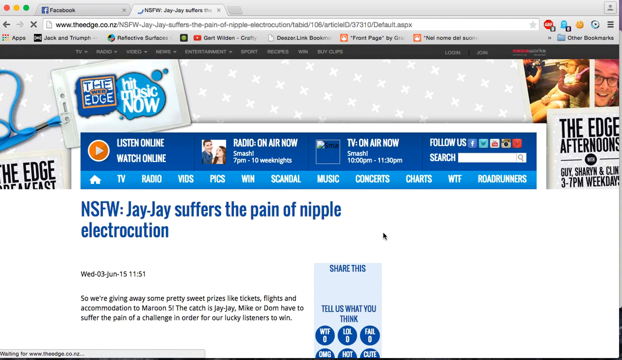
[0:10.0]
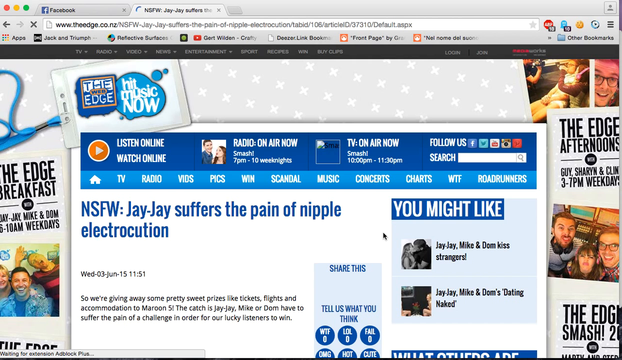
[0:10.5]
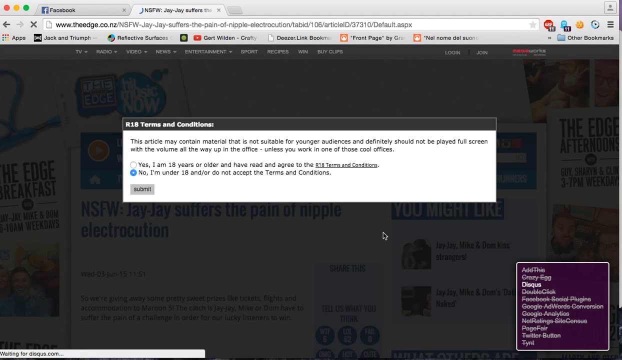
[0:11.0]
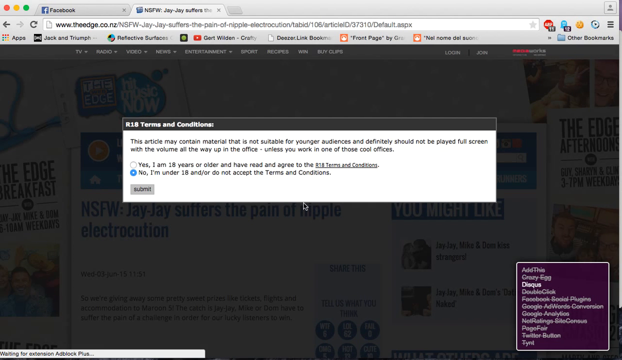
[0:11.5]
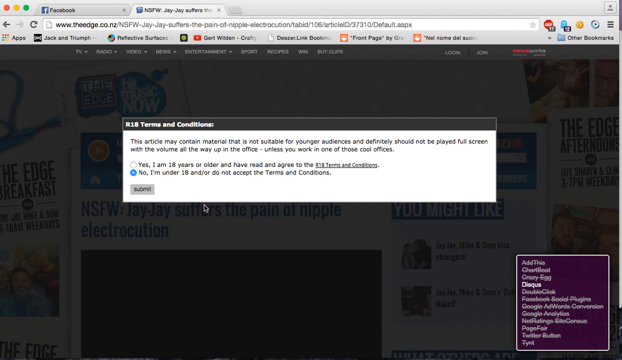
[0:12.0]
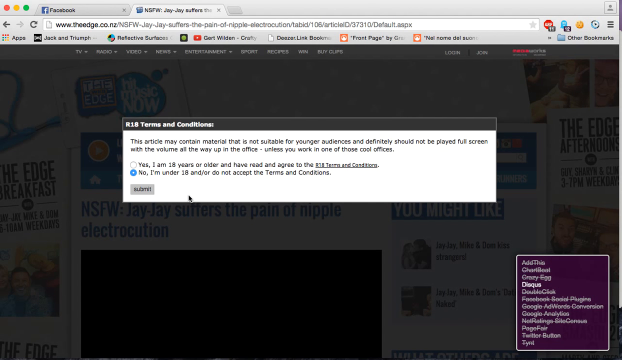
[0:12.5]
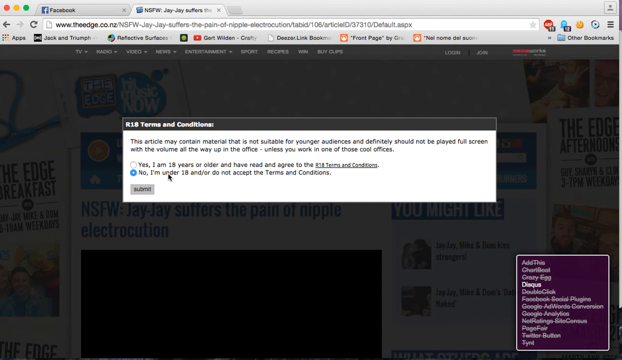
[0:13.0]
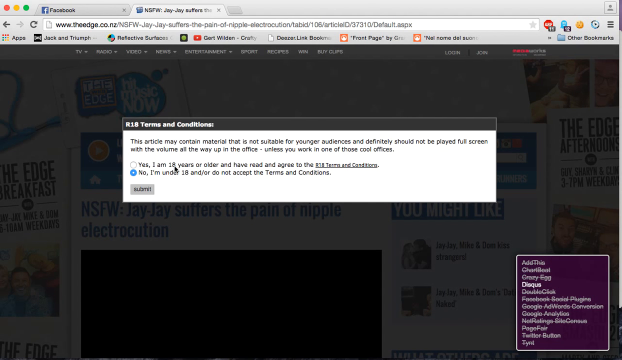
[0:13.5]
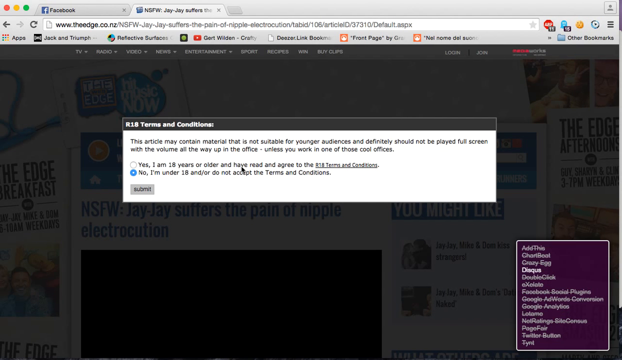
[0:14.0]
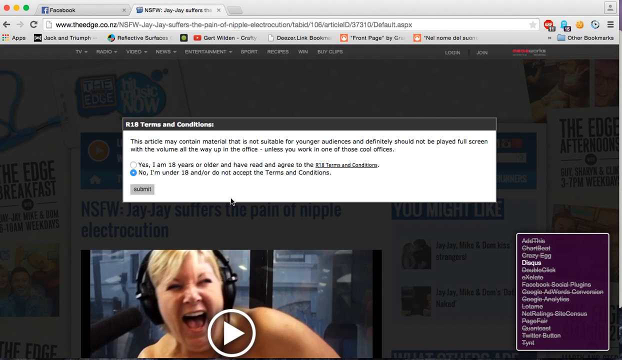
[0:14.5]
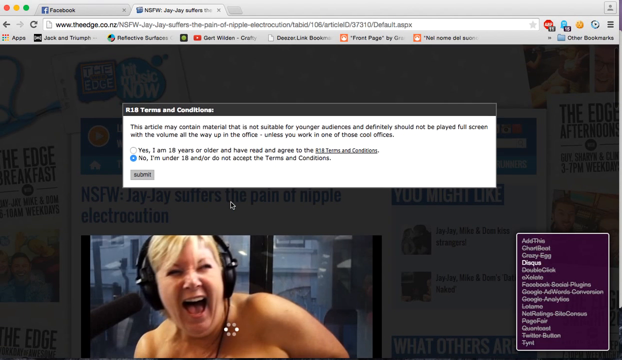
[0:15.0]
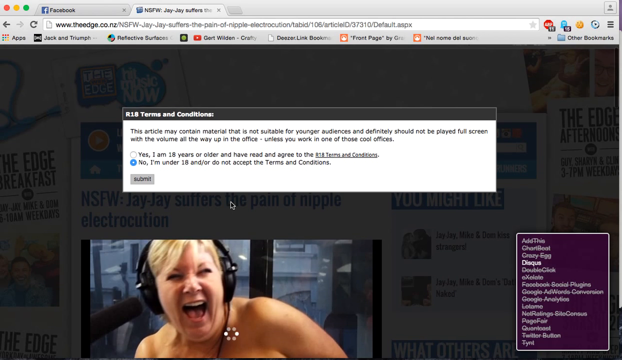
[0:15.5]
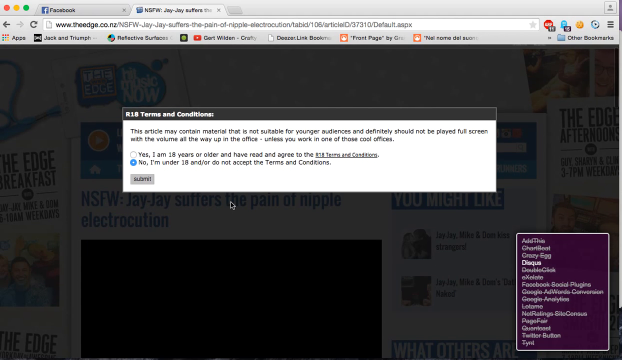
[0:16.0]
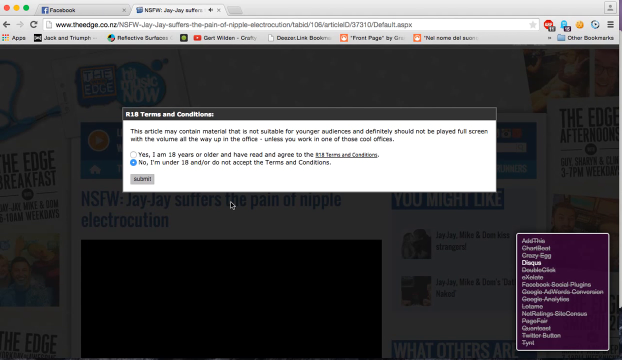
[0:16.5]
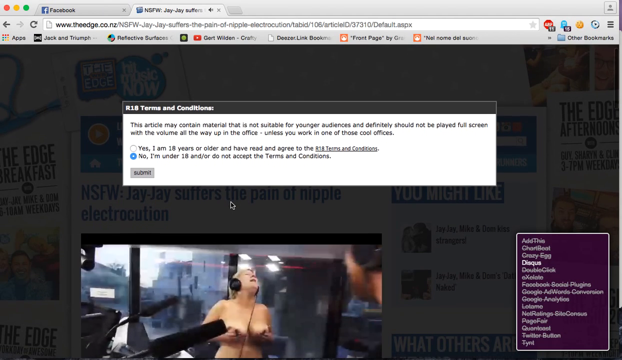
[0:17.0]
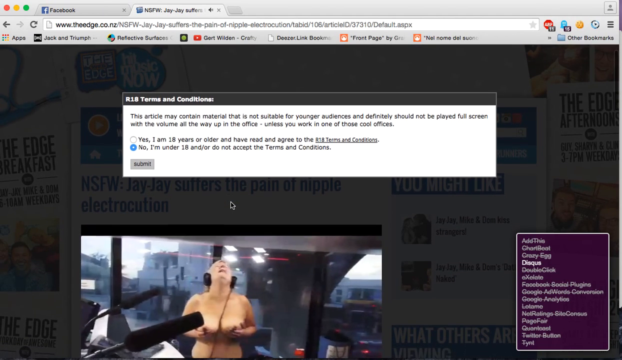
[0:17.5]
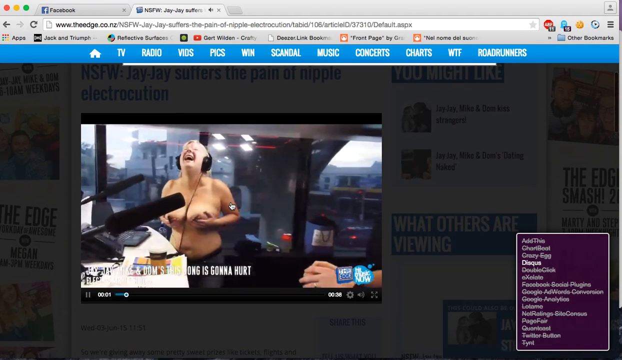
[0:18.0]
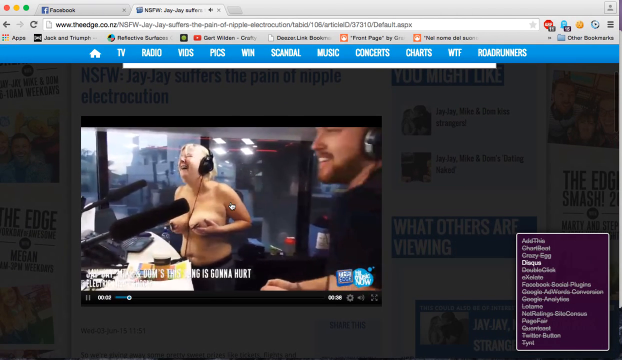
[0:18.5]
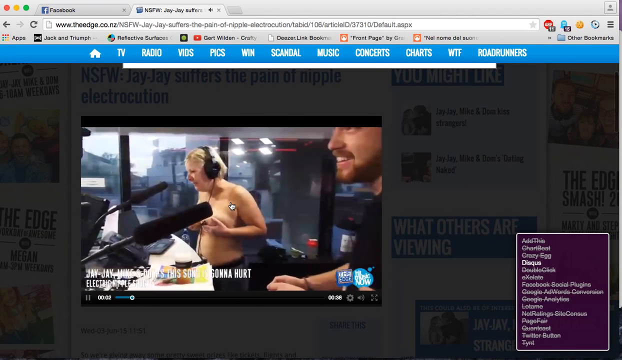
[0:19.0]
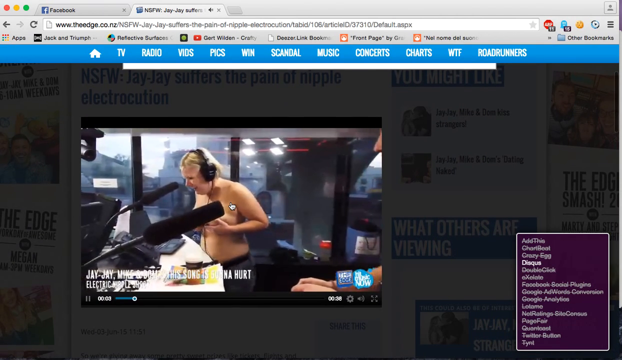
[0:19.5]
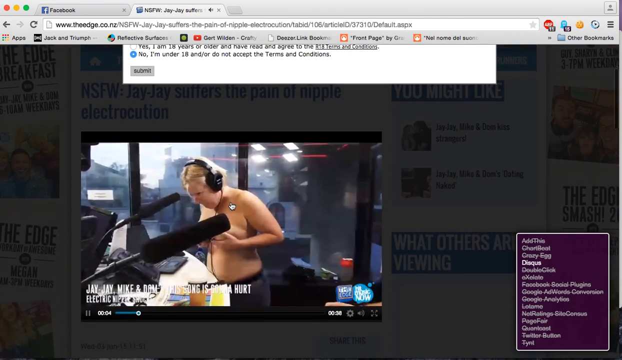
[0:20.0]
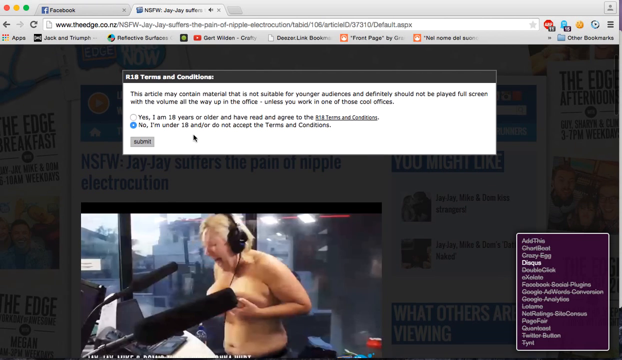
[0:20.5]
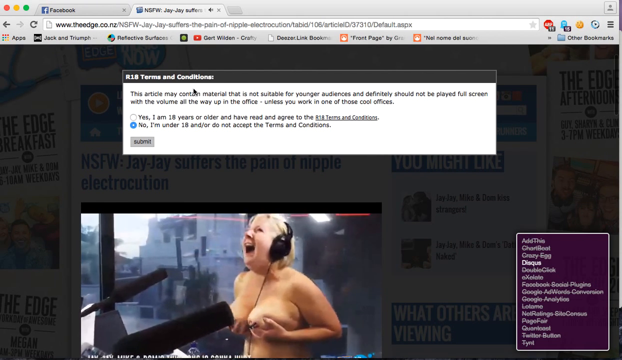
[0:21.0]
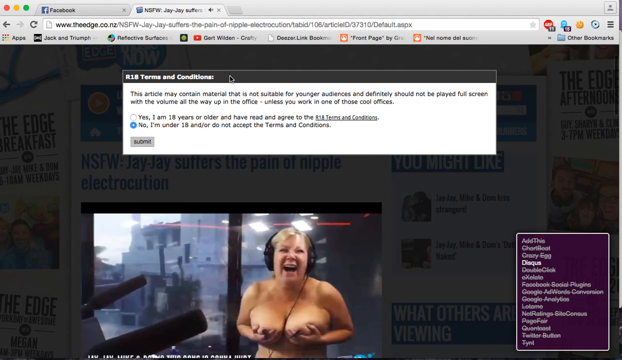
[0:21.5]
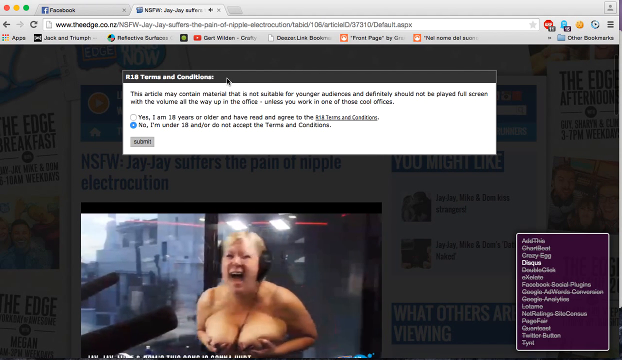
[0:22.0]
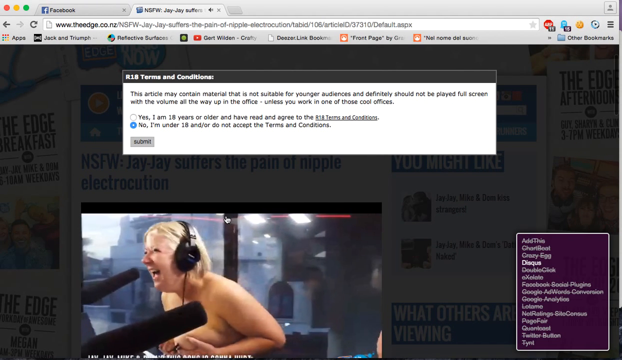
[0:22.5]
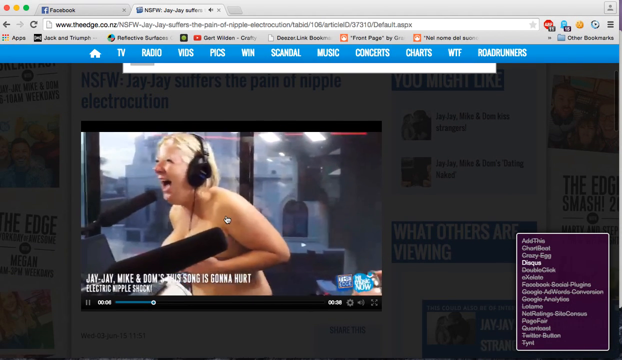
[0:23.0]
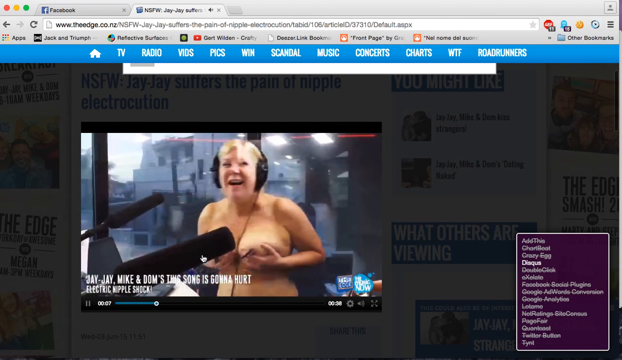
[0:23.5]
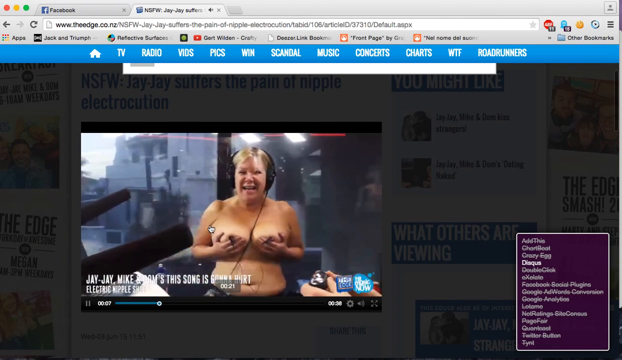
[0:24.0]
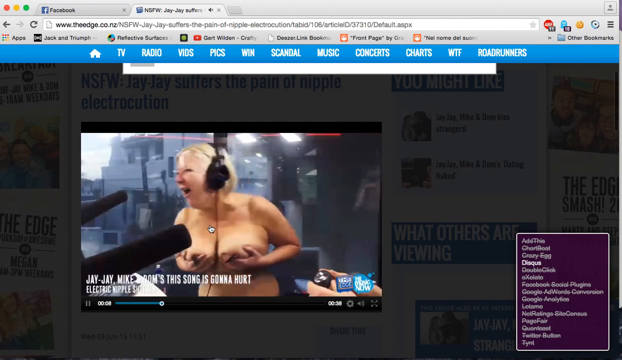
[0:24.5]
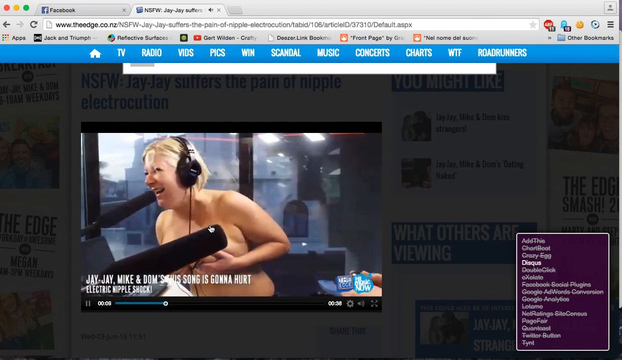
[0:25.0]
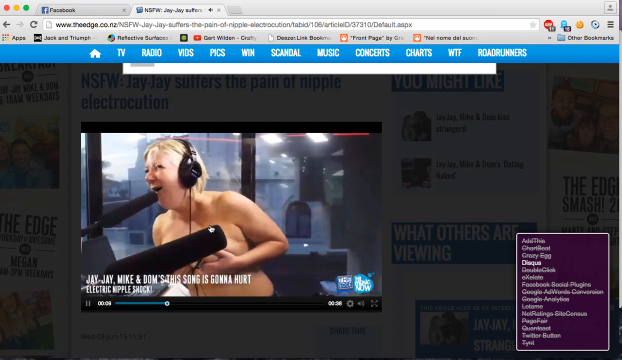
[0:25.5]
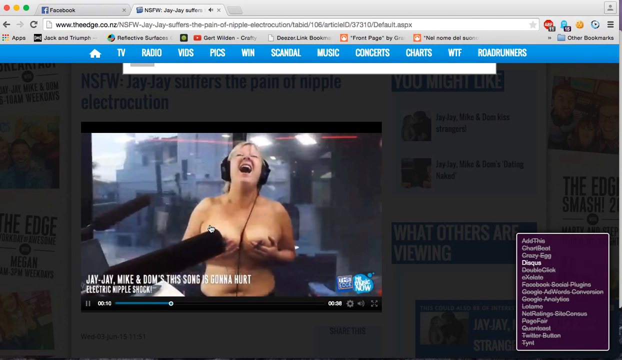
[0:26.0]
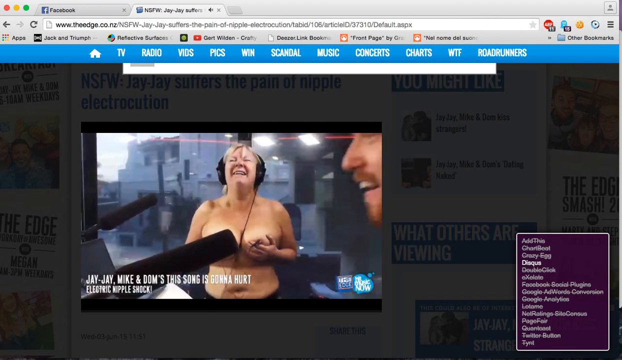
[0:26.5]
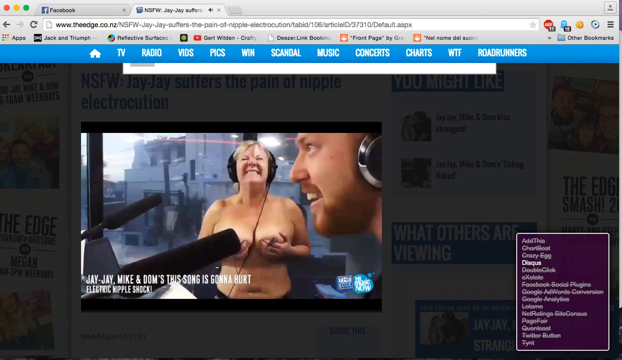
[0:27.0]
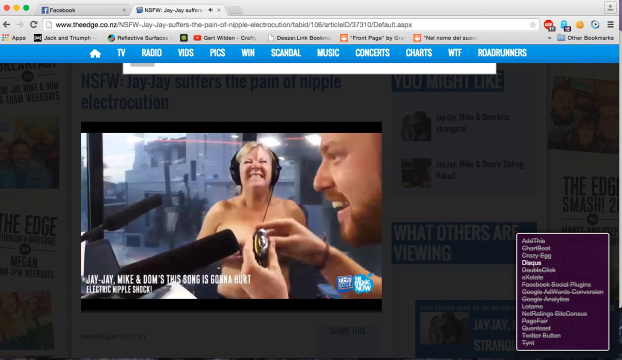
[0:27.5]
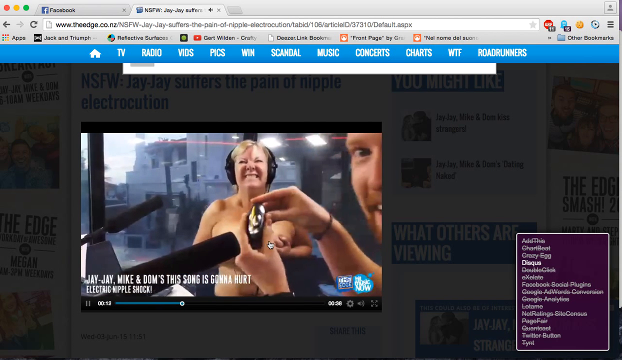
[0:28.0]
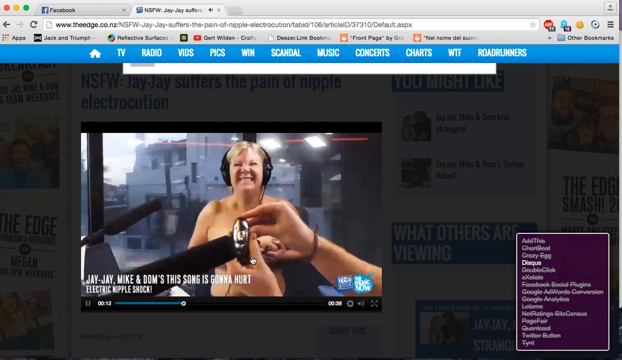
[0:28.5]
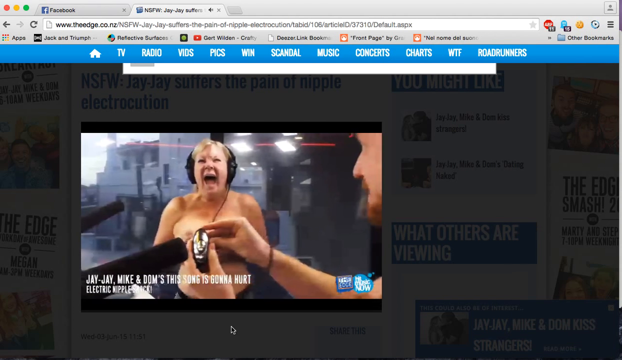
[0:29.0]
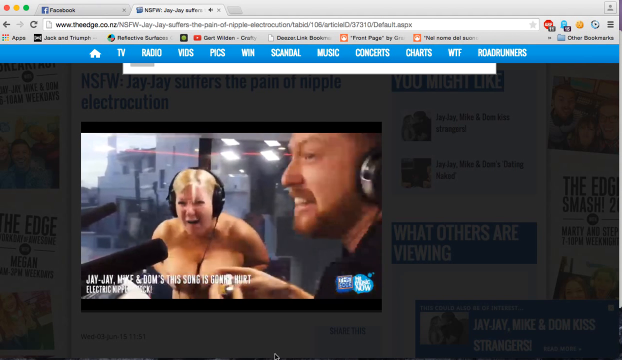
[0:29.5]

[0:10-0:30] A user reads the terms and conditions required to use the website and access an article and video. Before accepting them, the user scrolls up and down the page, mousing over the terms and conditions while the video plays in a preview. The video shows a shirtless woman in a music studio wearing a headset and covering her breasts with her hands. Electric probes are attached to her, and she receives nipple electrocution while trying to sing and record a song. A man in the studio has the controls to the electric nodes; as she keeps singing, he activates them, shocking her and causing her to yell and laugh as she continues trying to sing. The video is short, approximately 5 to 10 seconds long, and the user scrolls up and down while it plays.